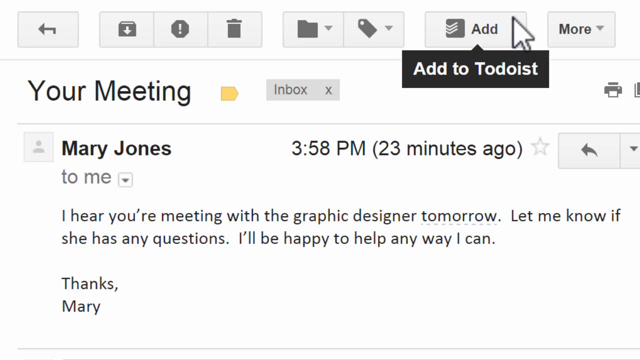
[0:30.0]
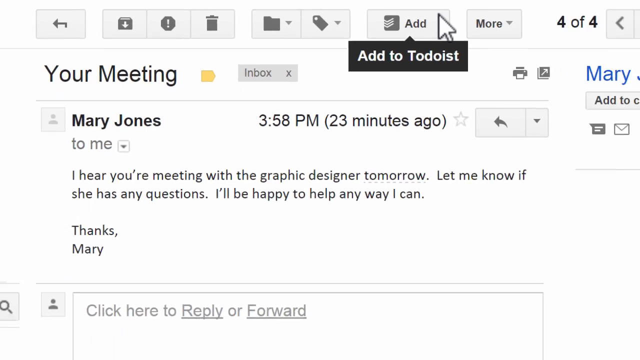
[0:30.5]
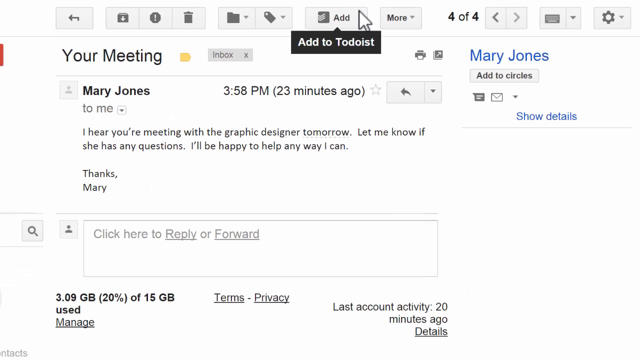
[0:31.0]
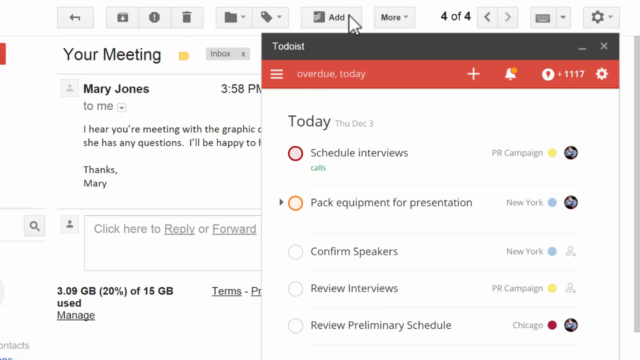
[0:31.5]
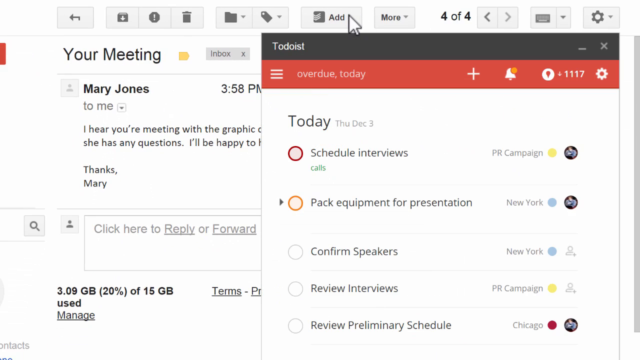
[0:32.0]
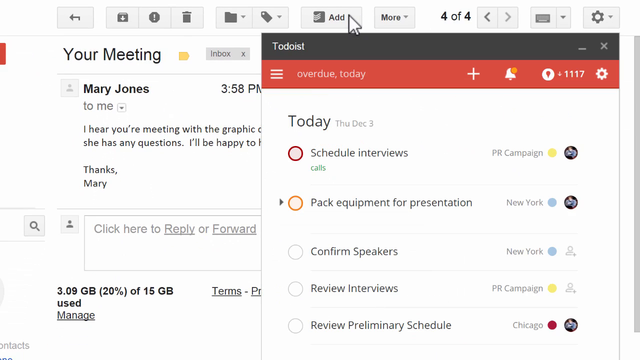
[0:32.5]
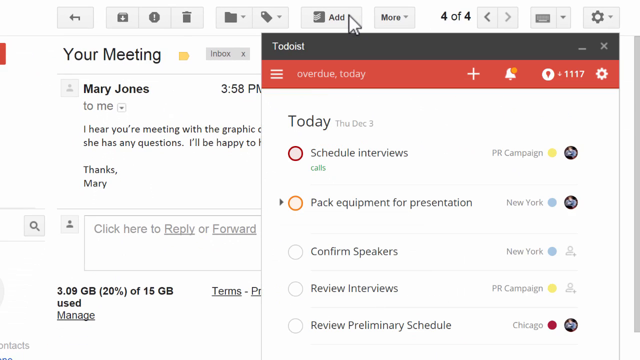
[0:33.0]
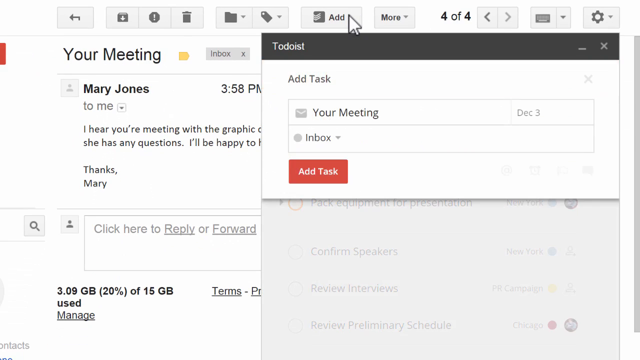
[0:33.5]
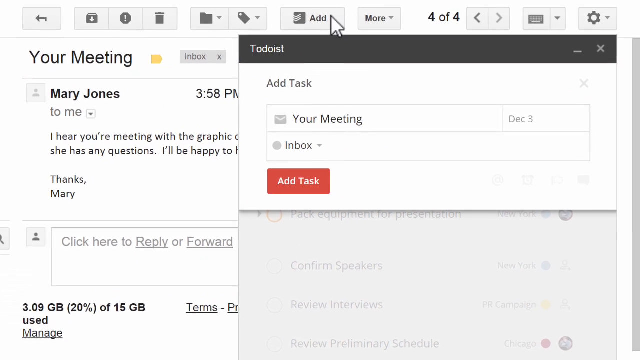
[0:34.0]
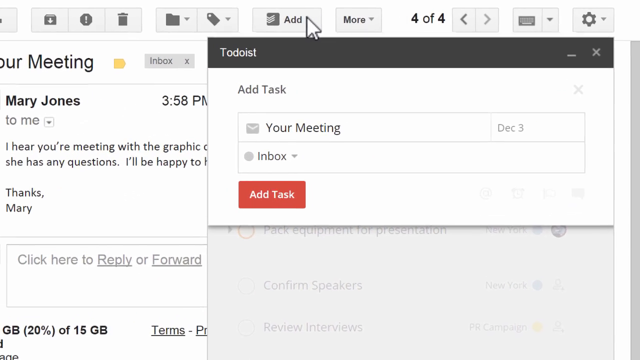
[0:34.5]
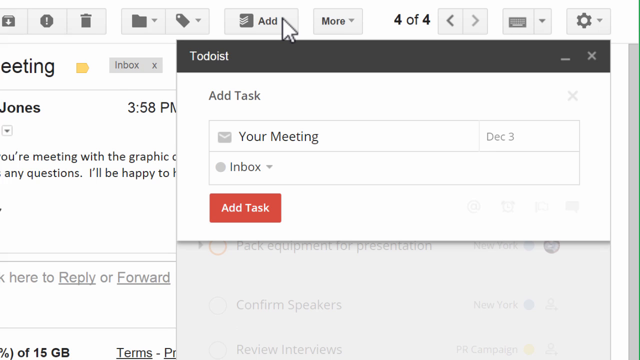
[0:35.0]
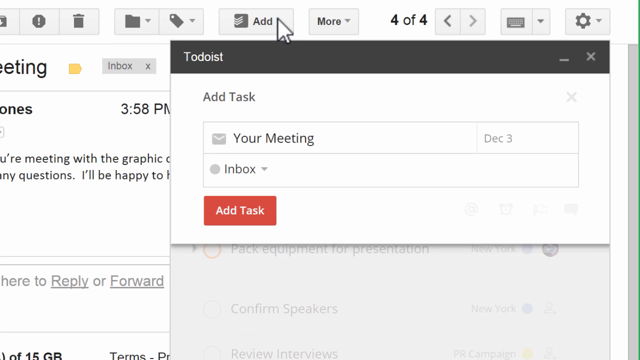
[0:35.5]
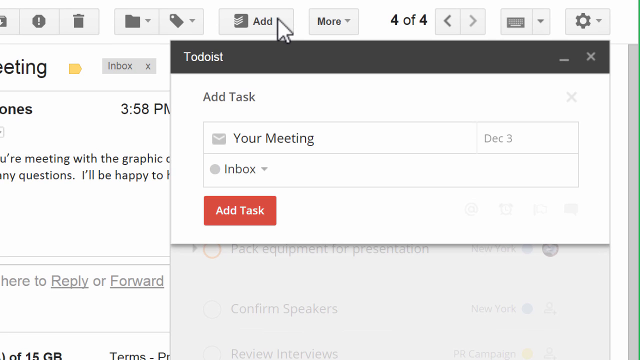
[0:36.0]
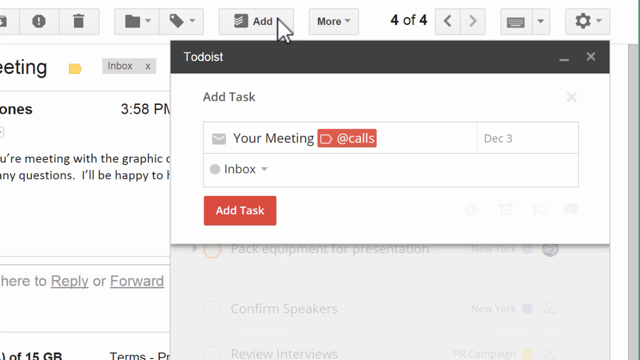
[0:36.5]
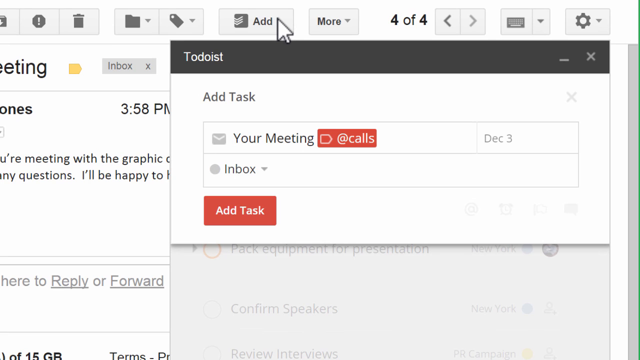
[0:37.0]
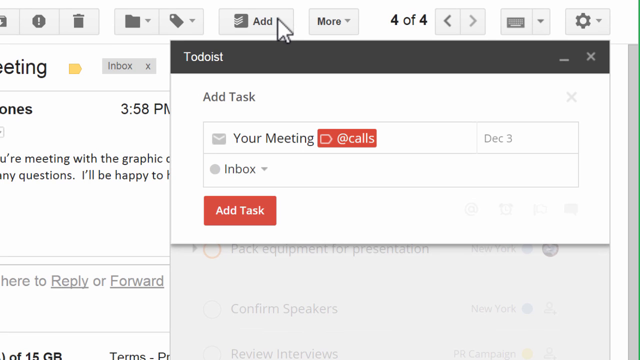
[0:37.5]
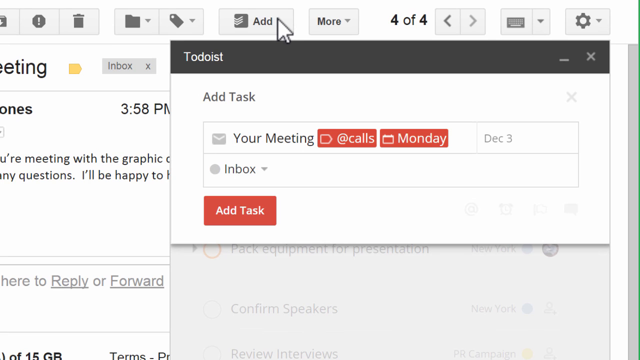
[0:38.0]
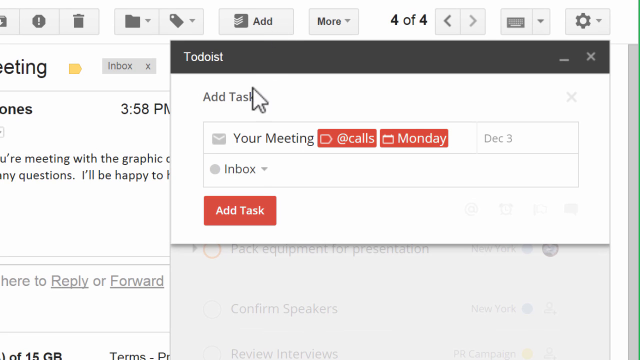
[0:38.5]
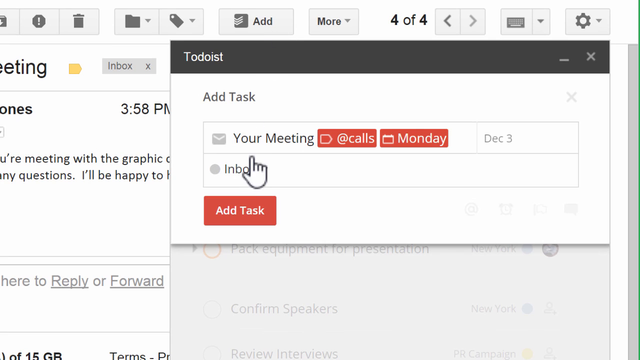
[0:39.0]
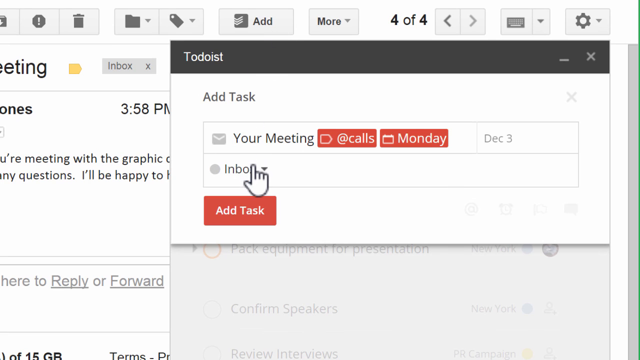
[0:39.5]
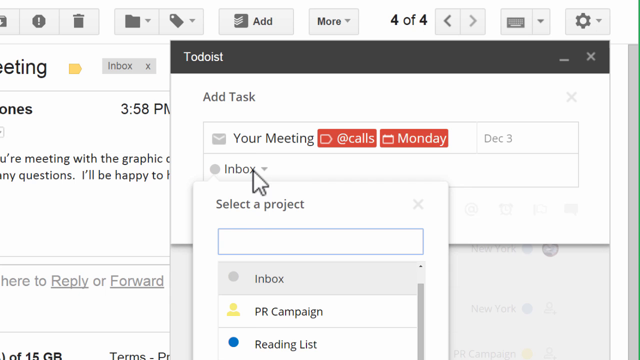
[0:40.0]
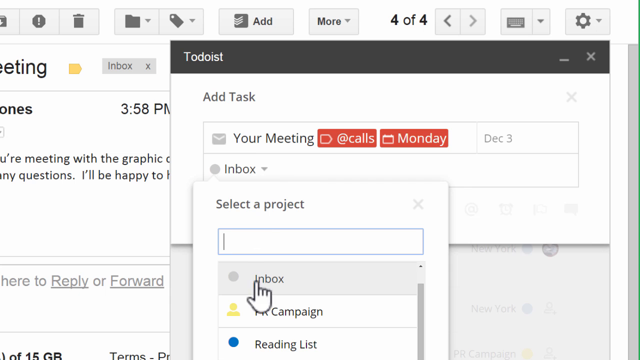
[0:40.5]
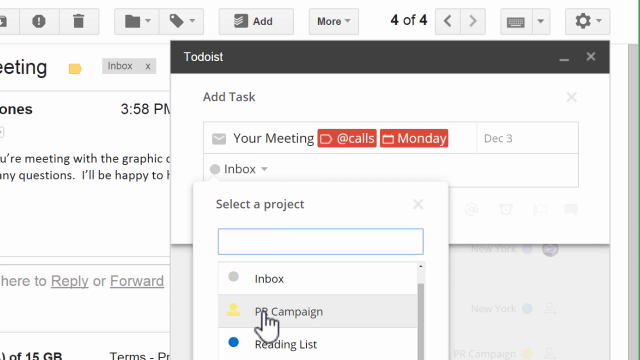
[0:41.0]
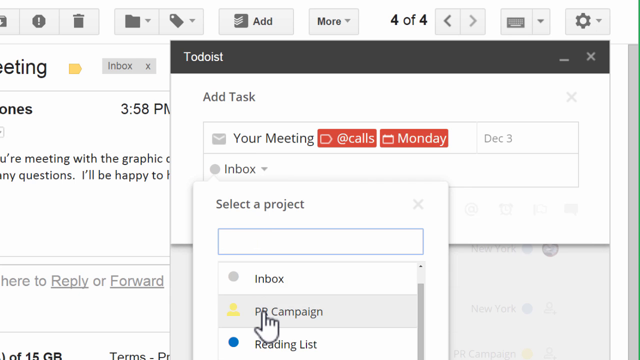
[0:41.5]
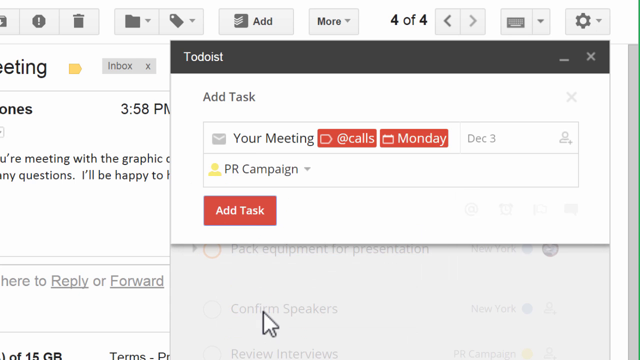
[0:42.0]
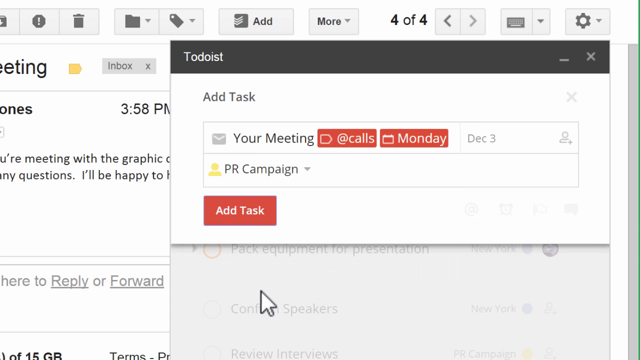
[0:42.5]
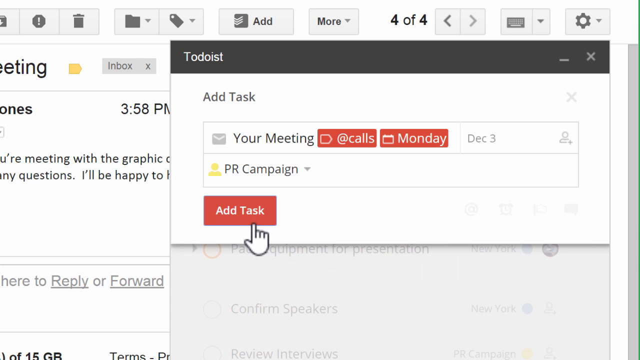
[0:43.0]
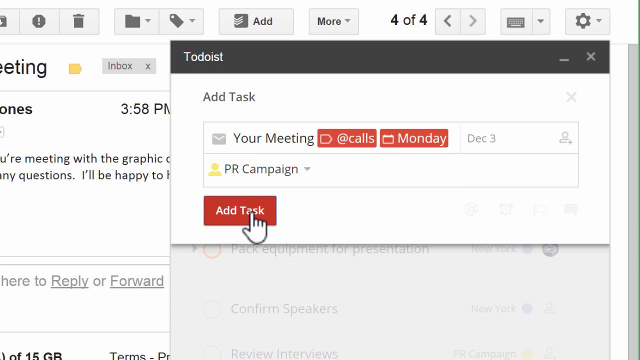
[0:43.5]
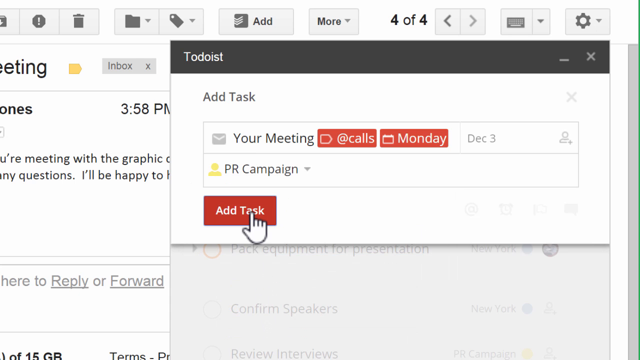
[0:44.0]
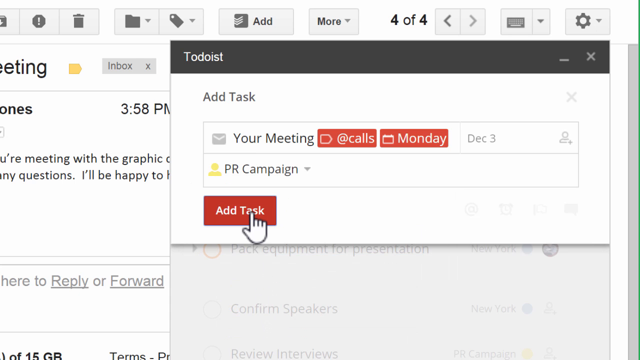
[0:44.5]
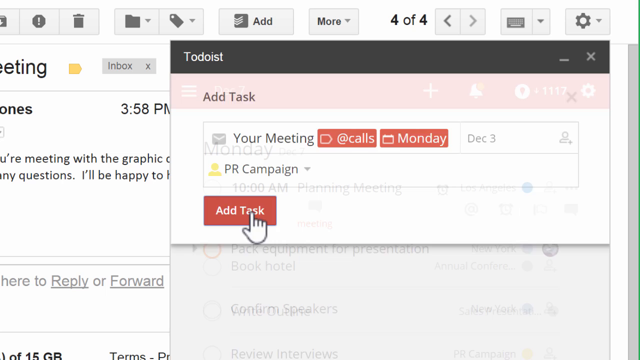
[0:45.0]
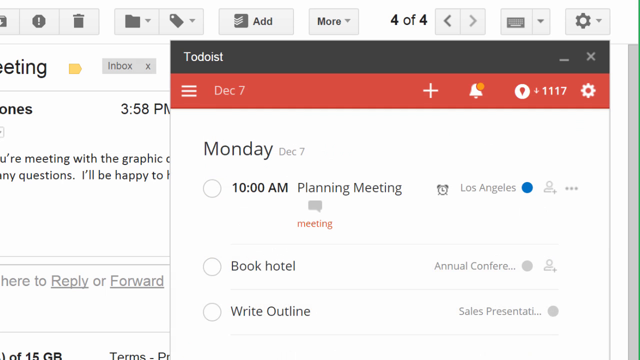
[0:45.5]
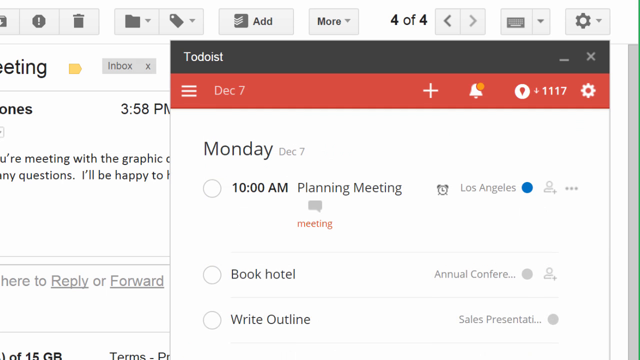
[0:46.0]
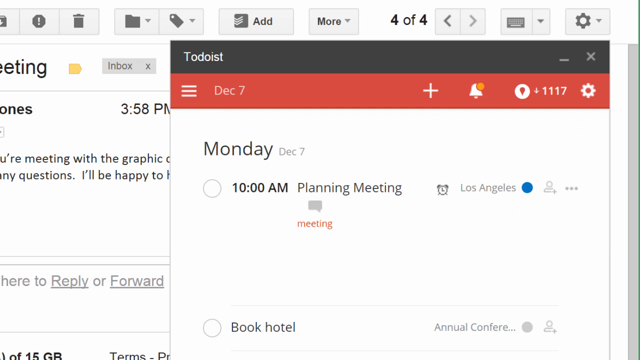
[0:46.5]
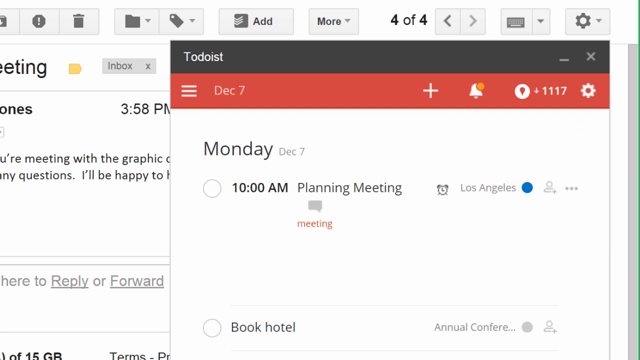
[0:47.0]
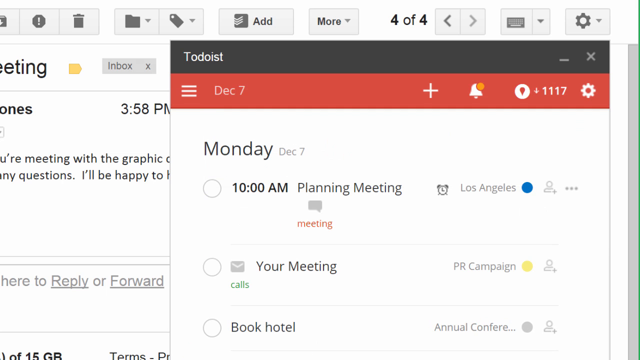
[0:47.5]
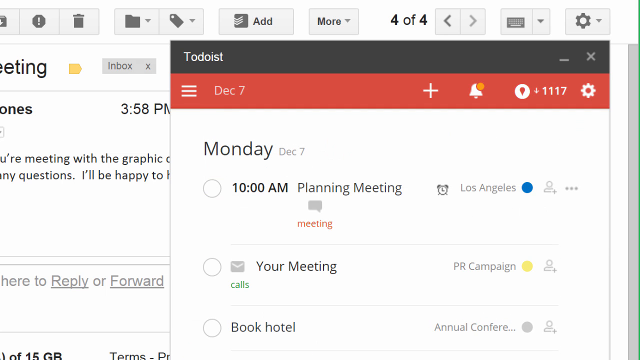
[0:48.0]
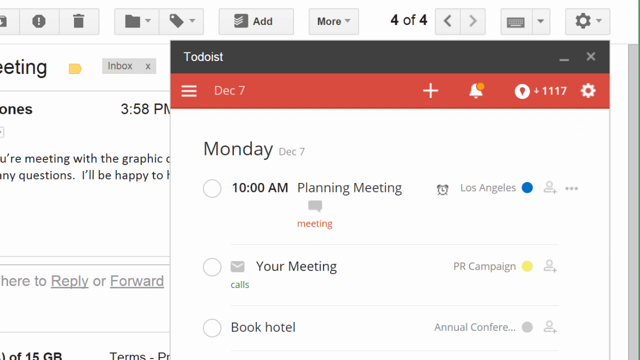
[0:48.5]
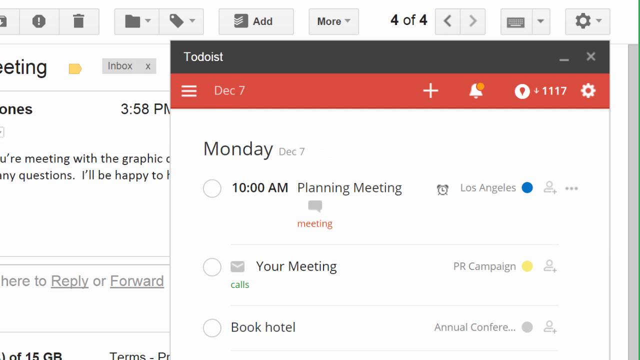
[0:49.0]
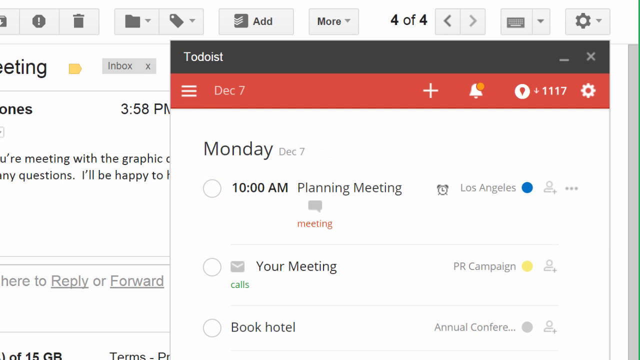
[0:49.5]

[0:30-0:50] What looks like a snapshot of Todoist appears, with different icons at the top and the mouse hovered over Todoist; under this it says "your meeting" and "Mary Jones to me." The view zooms out from Todoist, the person selects Add, and a Todoist list pops up, followed by a "Todoist Add Task" window. The view zooms in, and a little calendar and "Monday" pop up beside "your meeting." The person selects Inbox, then selects the PR campaign and Add Task, and the task is added to Todoist. Also on the screen is "Monday, December the 7th," and before the new task was added it shows "10 a.m. planning meeting" in Los Angeles, with a very small clock beside the name Los Angeles.